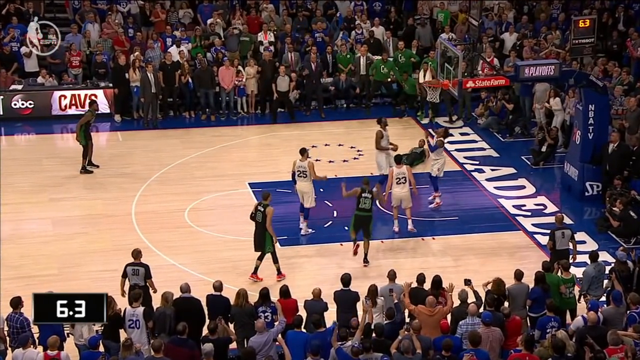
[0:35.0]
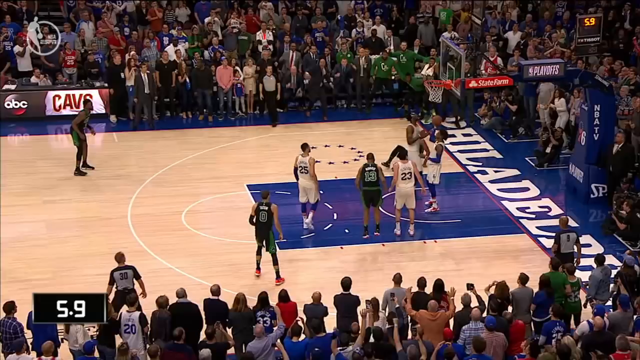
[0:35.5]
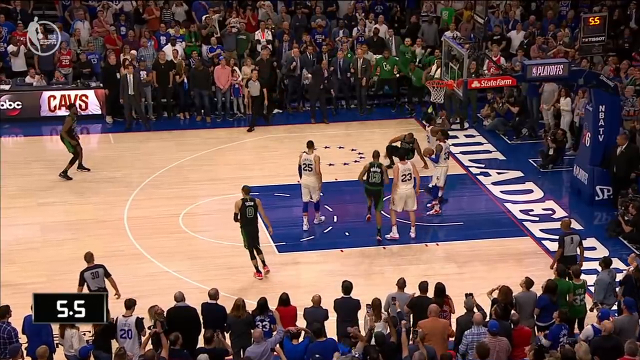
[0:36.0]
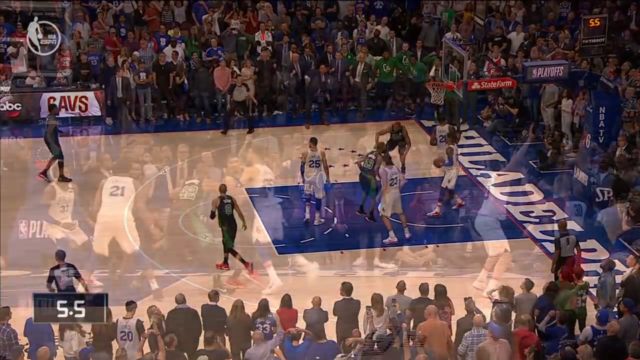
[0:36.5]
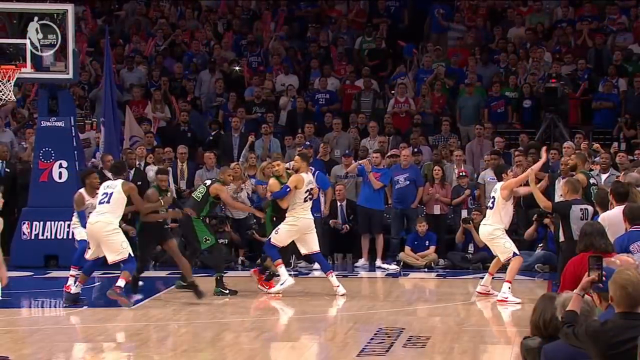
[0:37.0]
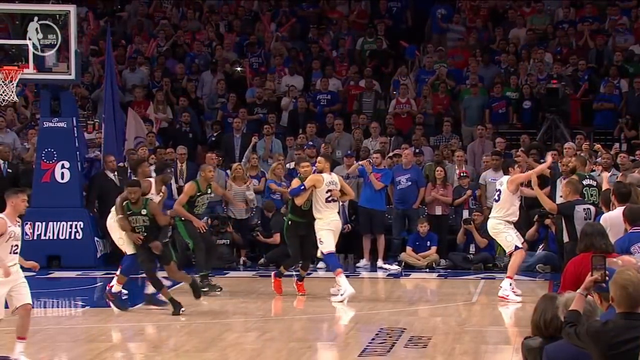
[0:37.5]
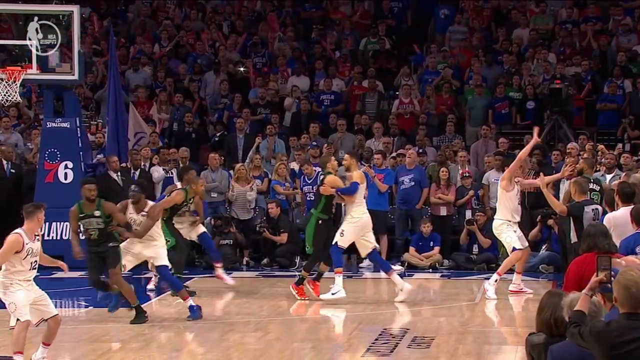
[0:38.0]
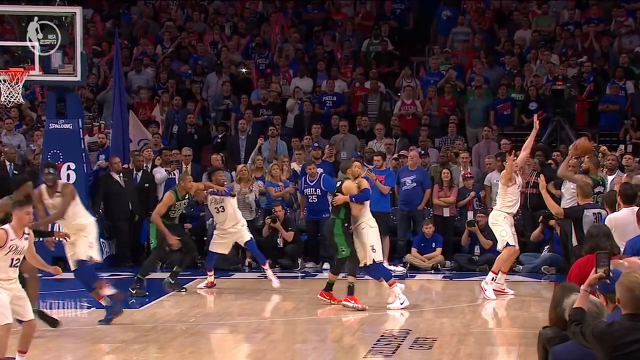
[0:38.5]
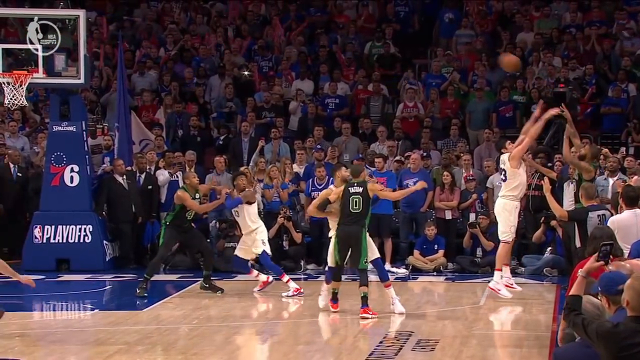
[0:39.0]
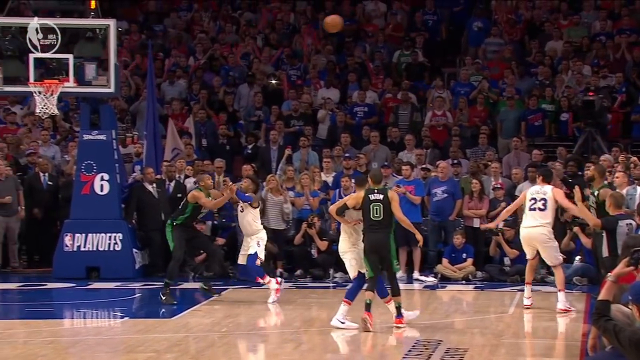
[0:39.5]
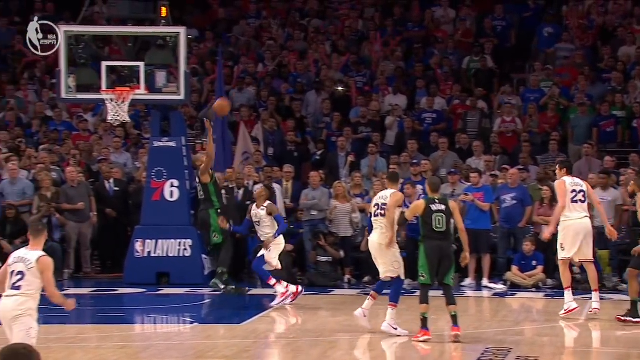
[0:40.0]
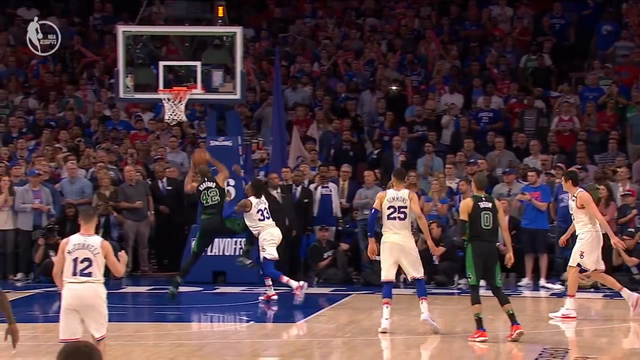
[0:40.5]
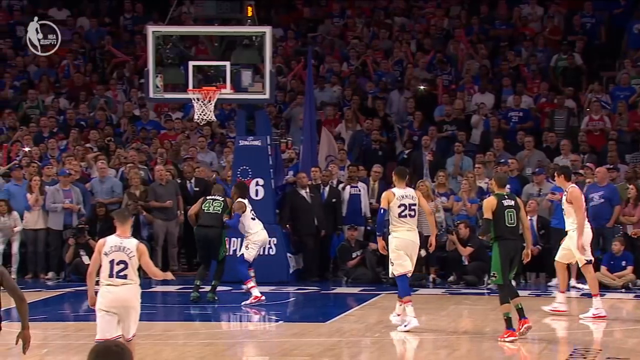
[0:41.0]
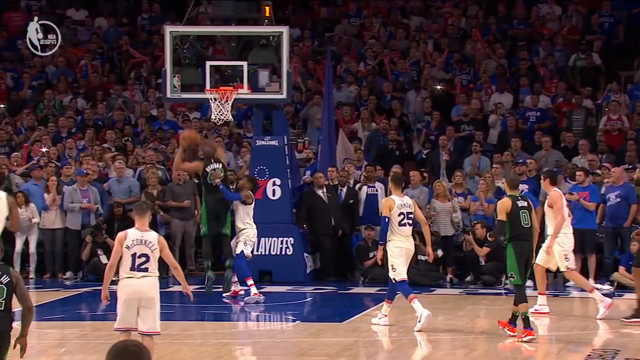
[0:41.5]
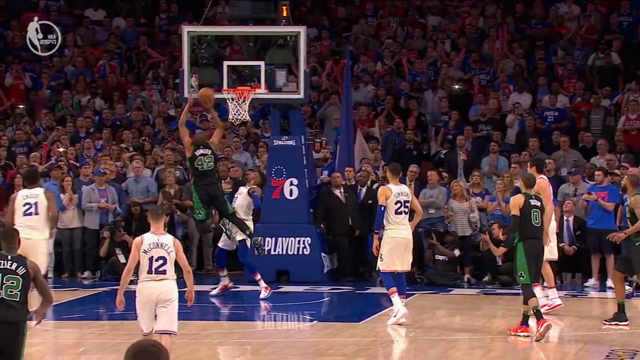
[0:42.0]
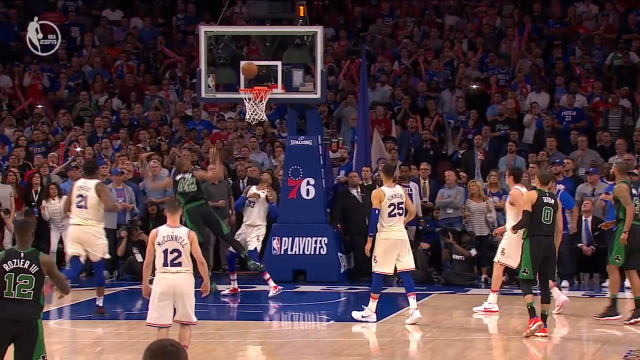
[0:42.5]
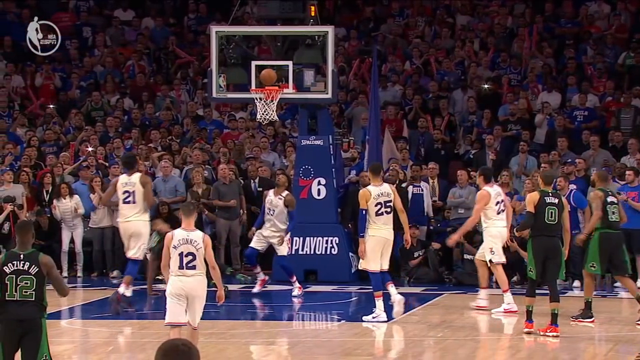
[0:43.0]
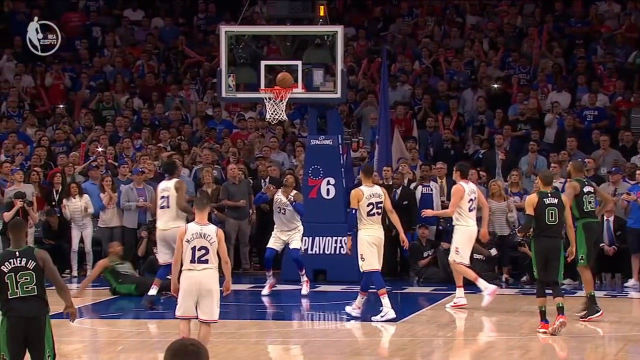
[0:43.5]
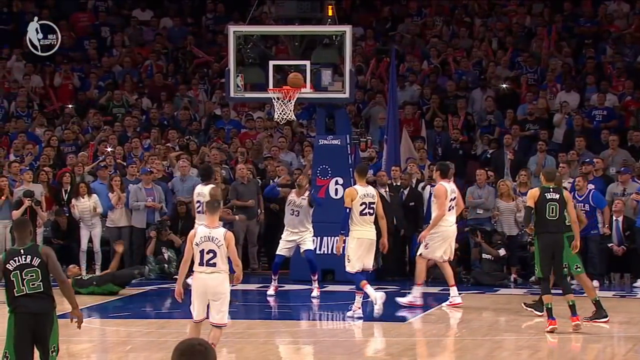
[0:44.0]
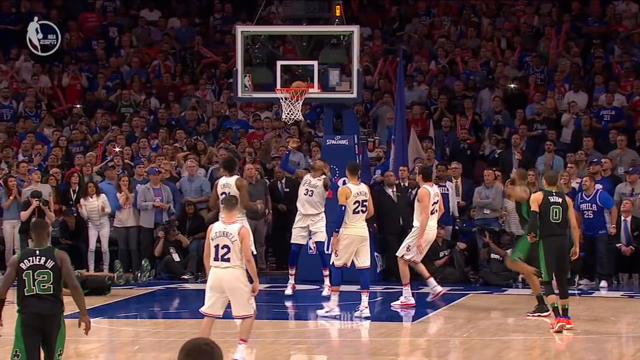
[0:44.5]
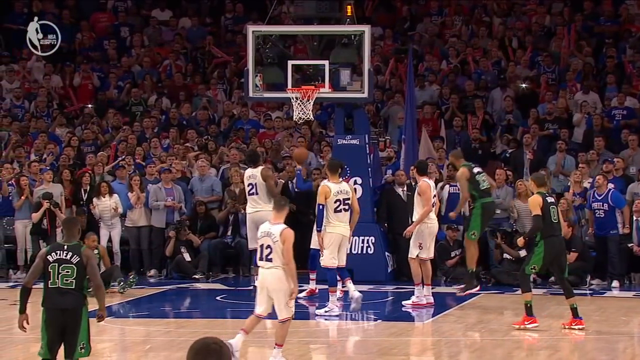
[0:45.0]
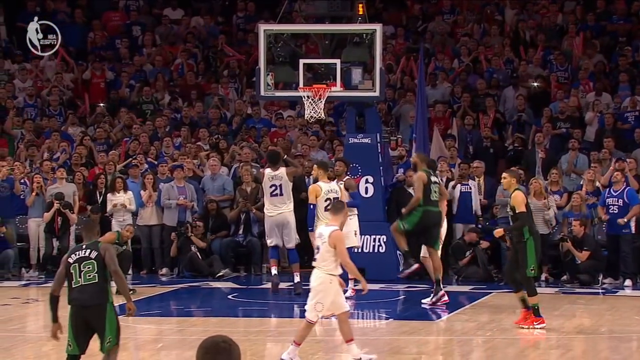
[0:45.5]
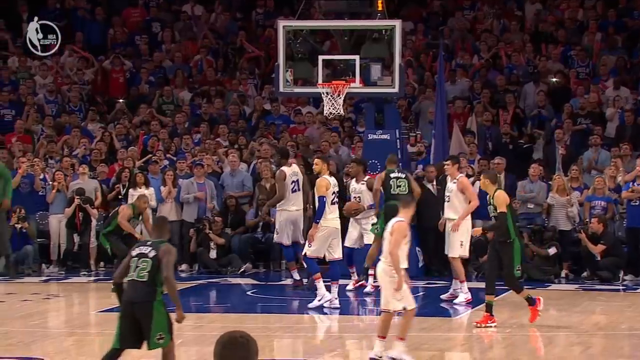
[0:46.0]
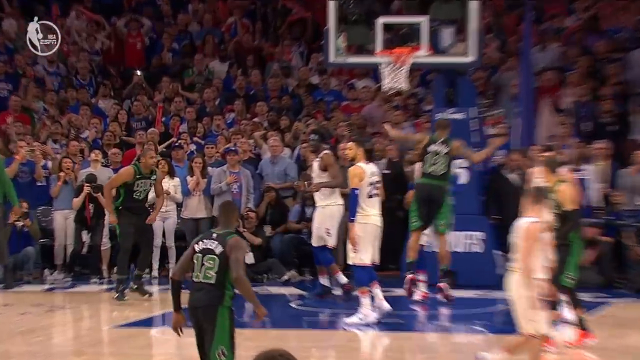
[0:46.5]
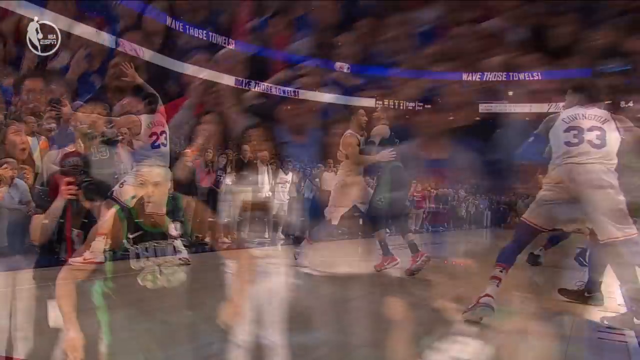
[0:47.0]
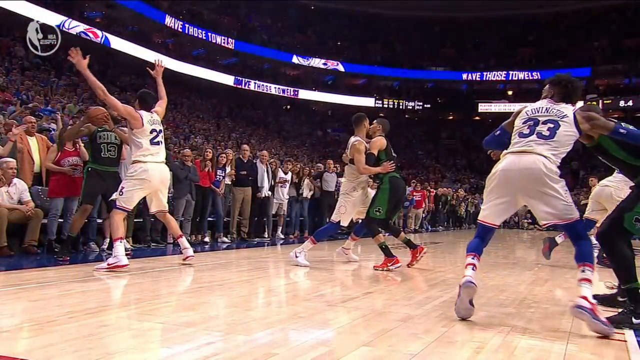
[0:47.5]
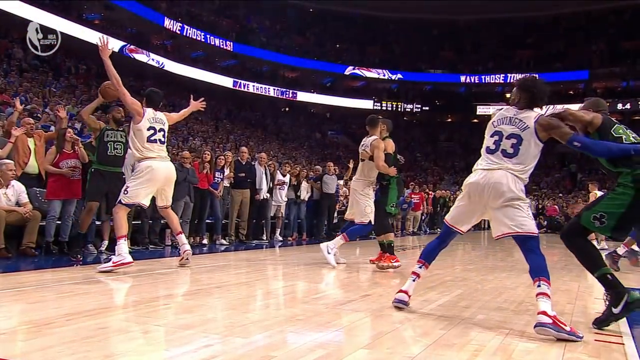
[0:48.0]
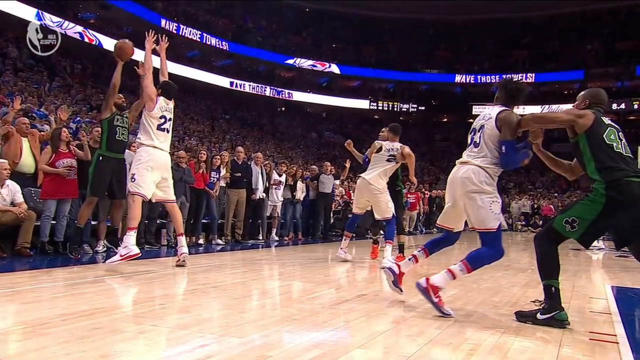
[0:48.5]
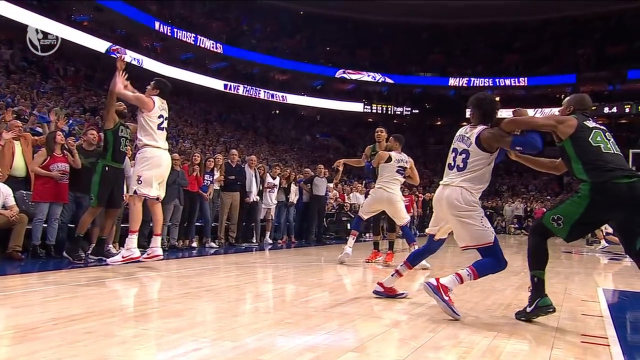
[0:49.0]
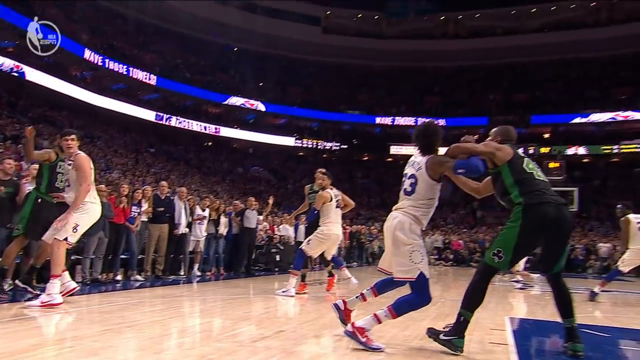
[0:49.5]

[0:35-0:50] Multiple views of the last play are shown: the pass to the player, who makes the shot and then dives down. The play is replayed in slow motion, then in even slower motion from a different angle. It looks like he went at a weird angle to take the shot. Another view seems to show the shot from the bottom up on the right side. The player who took the shot wears jersey number 42, and he was apparently passed the ball by number 13.